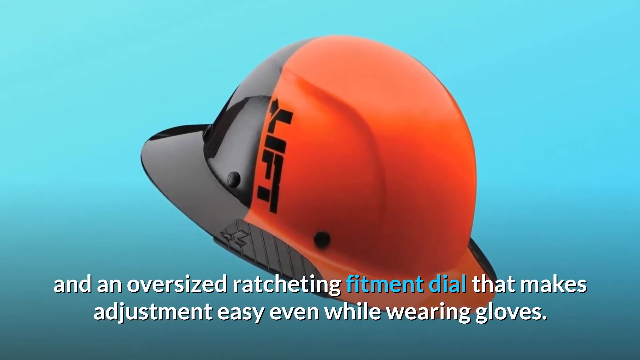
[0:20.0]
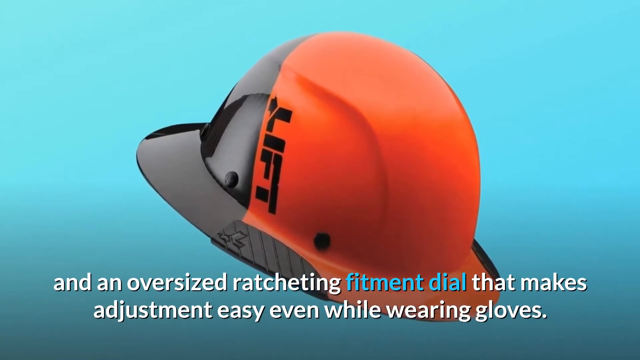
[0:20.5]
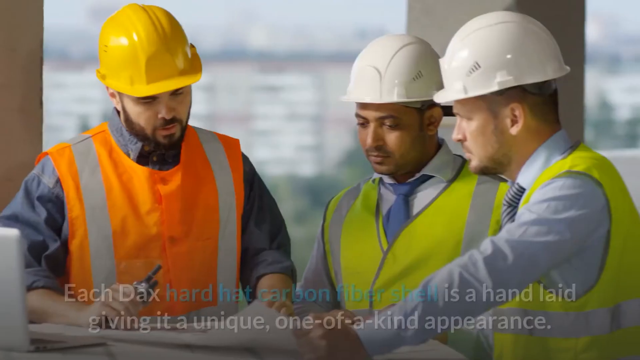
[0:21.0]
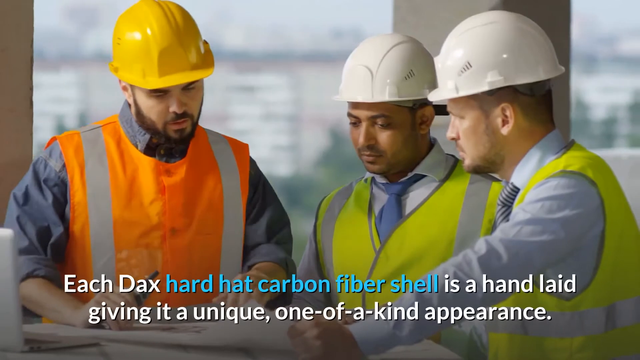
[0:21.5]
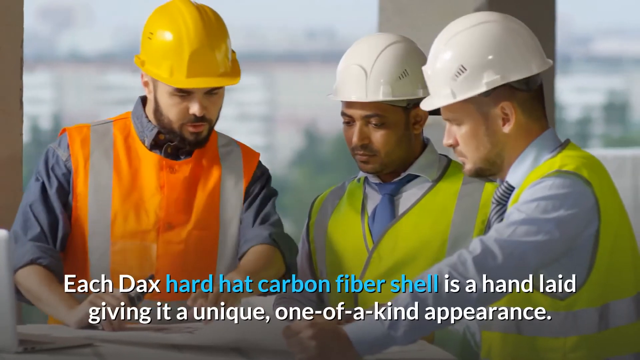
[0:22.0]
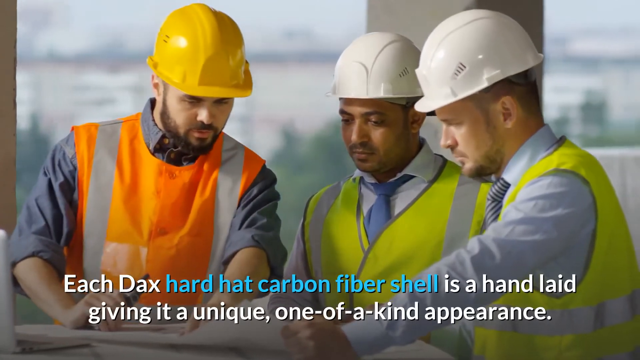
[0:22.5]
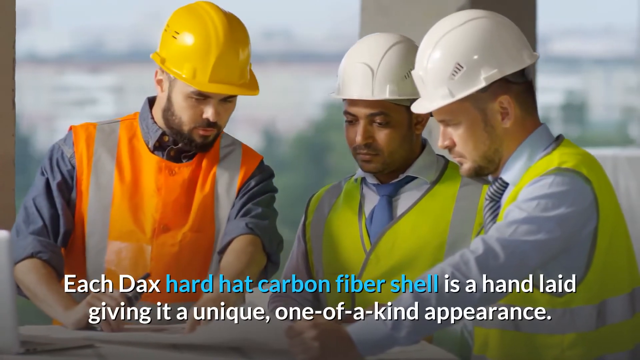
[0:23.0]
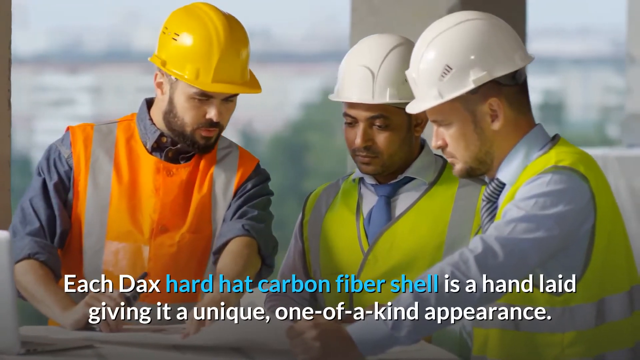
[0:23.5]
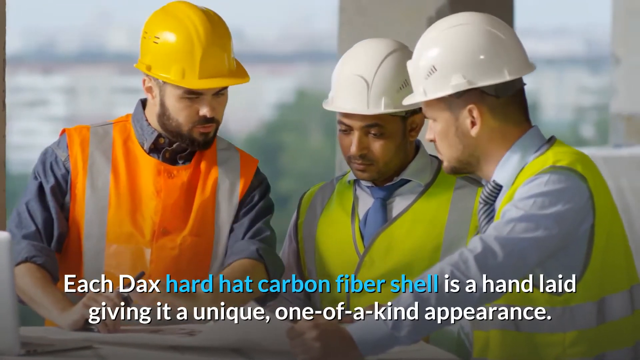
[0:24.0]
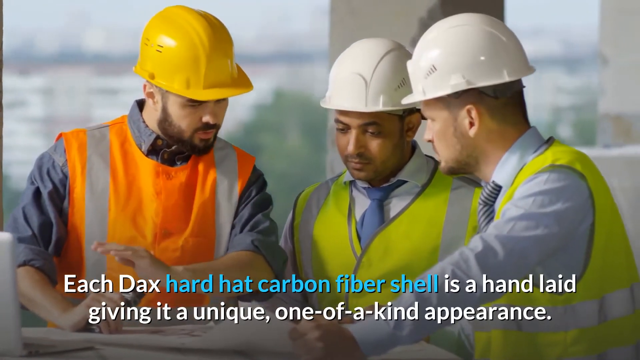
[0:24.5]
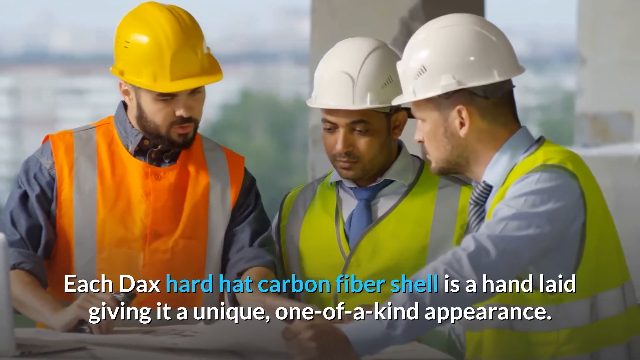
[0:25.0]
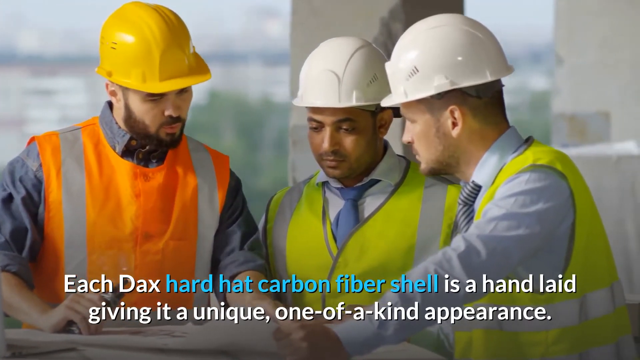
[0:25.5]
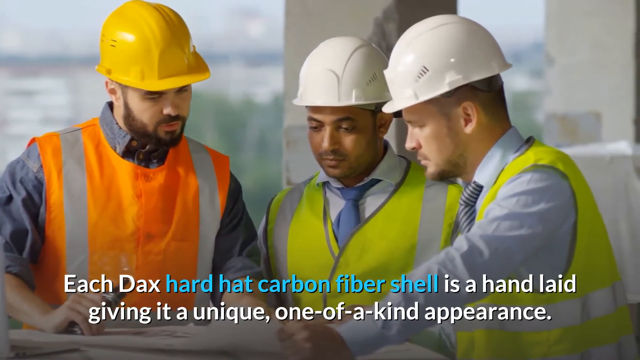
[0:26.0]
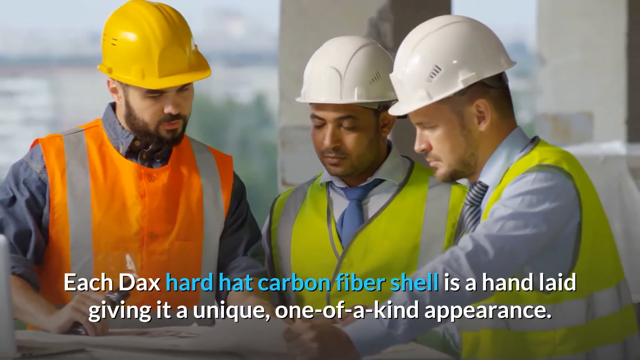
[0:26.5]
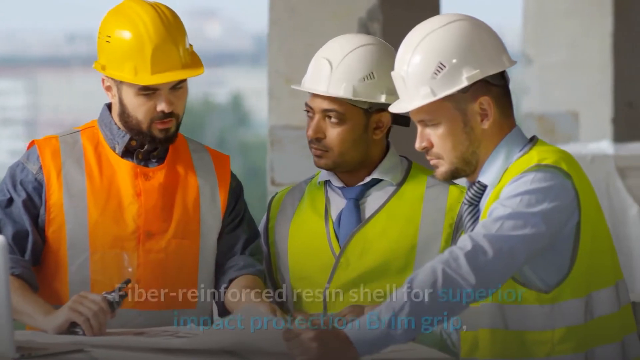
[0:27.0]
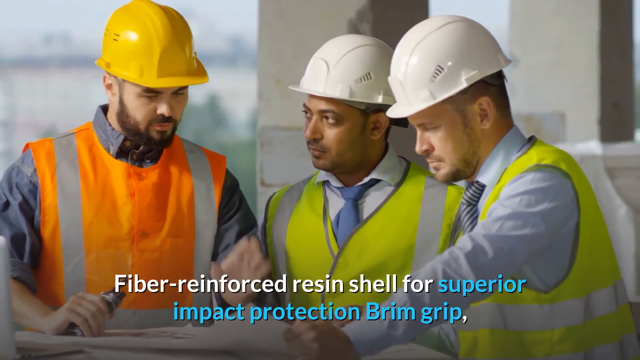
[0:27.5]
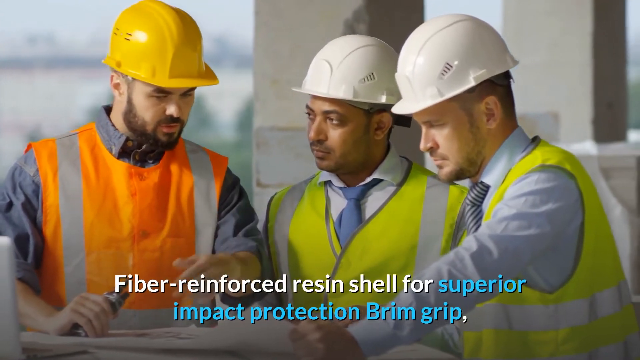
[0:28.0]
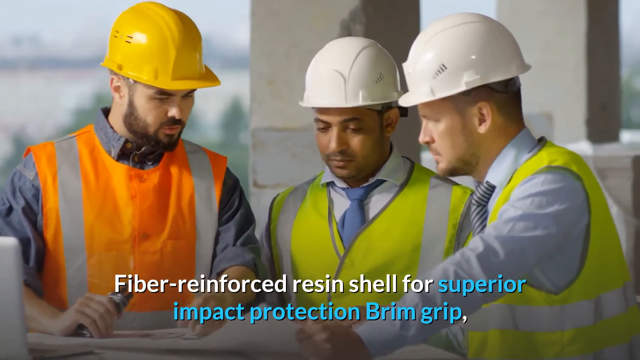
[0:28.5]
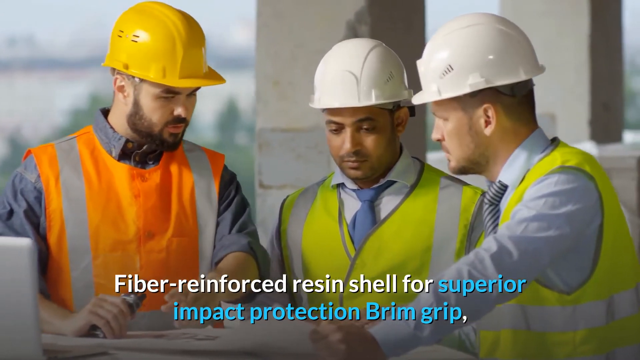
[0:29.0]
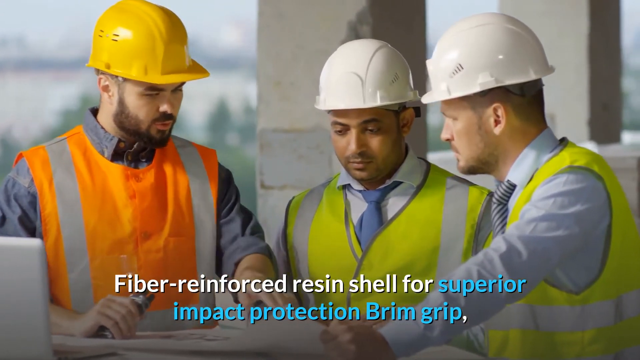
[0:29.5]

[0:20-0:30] The video shows what seems to be stock footage of three construction workers who are not wearing the hat featured in the video. Text on top says "each DACS hard hat carbon fiber shell is a hand laid, giving it a unique one-of-a-kind appearance." The three workers seem to be looking over a plan and discussing it. The worker on the left wears a yellow hard hat, and the other two wear white hard hats.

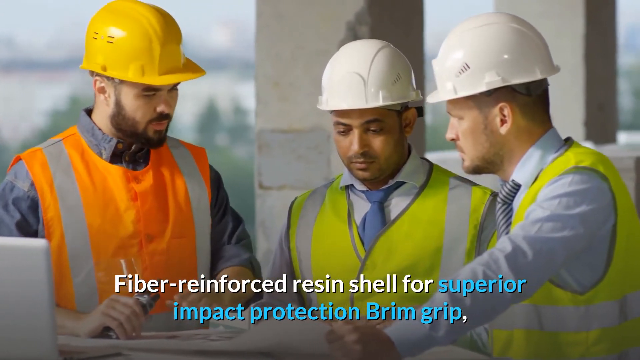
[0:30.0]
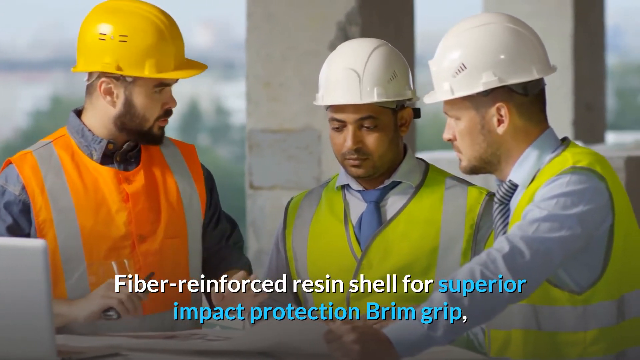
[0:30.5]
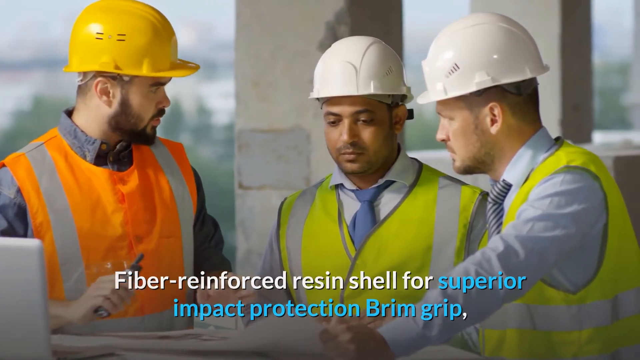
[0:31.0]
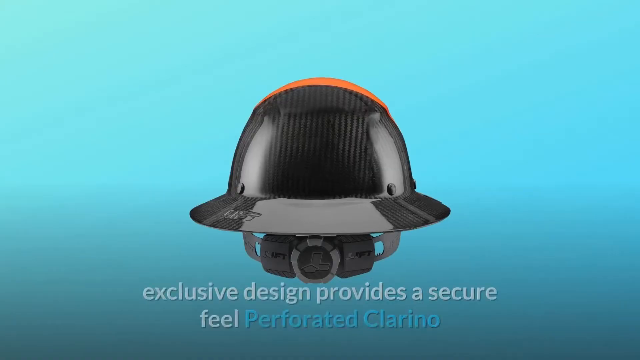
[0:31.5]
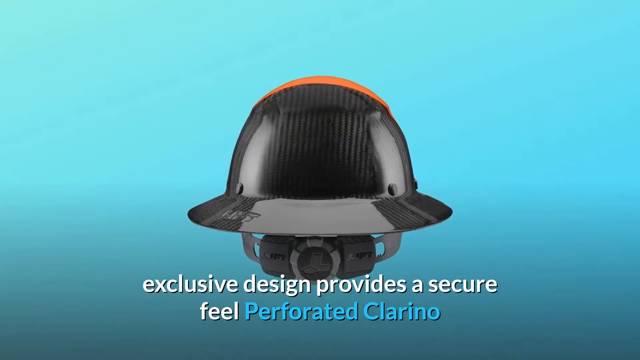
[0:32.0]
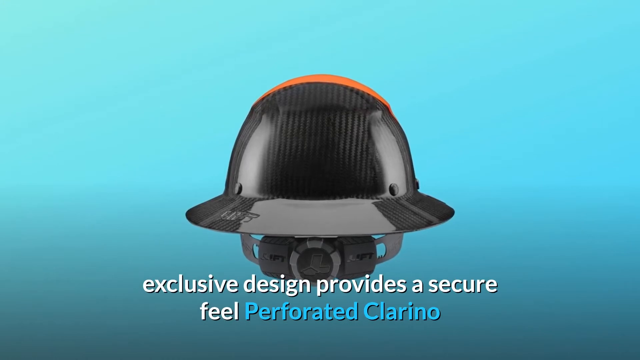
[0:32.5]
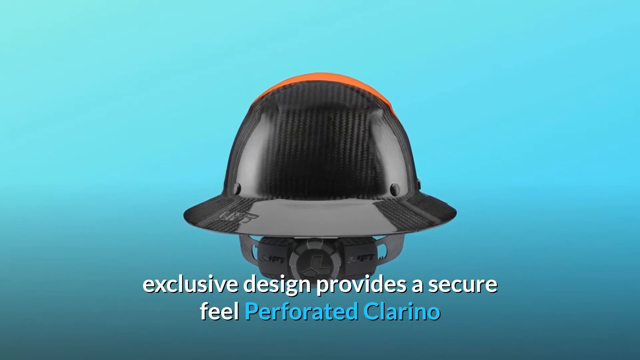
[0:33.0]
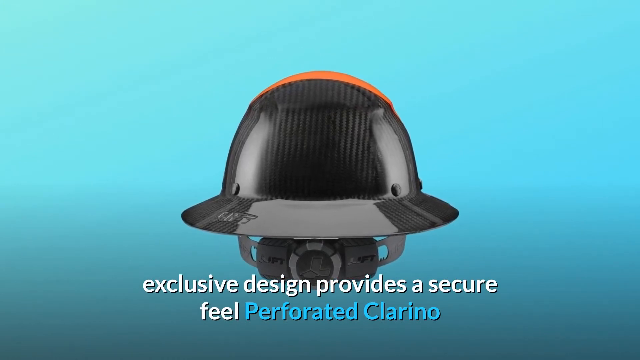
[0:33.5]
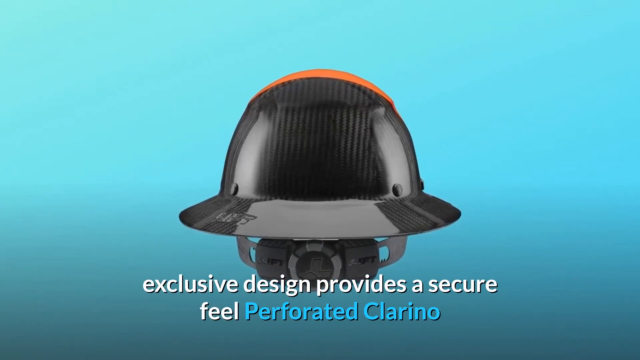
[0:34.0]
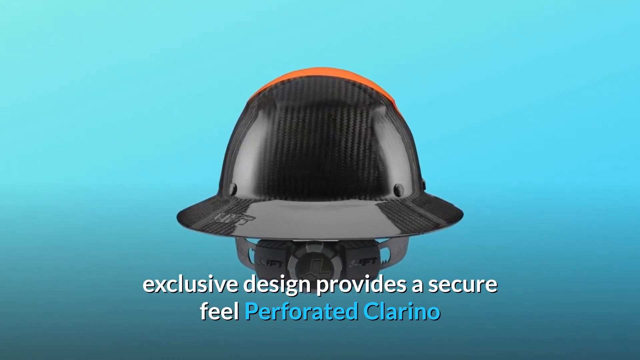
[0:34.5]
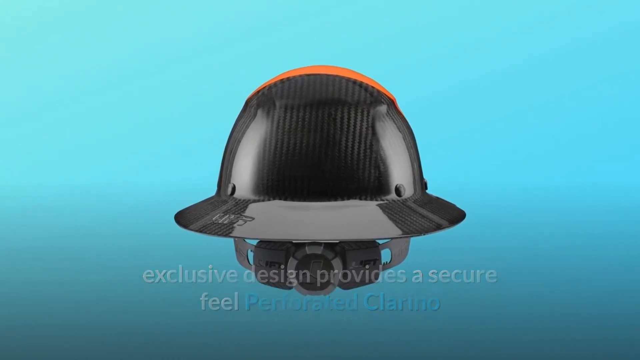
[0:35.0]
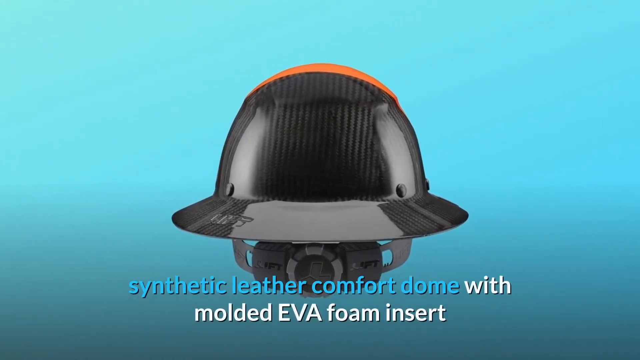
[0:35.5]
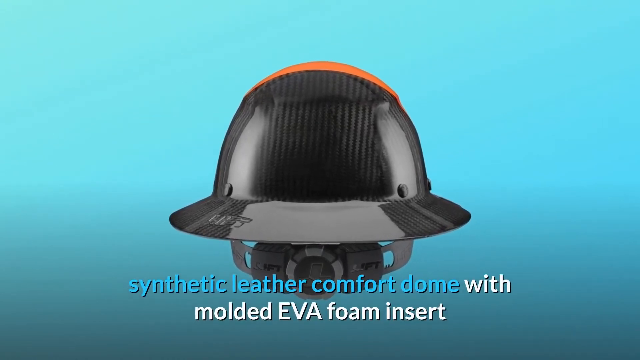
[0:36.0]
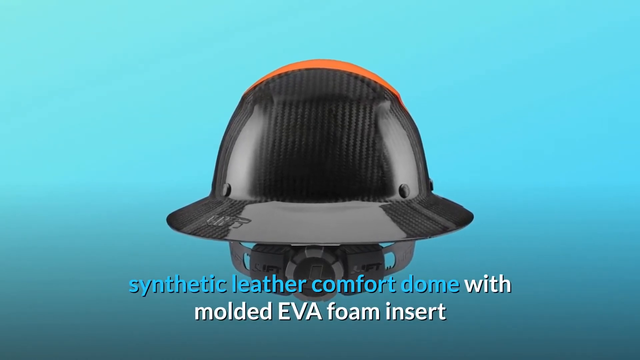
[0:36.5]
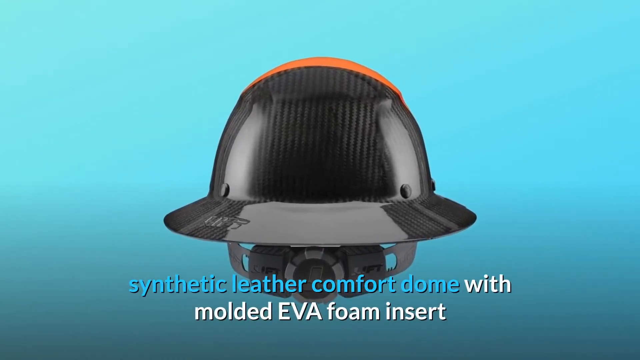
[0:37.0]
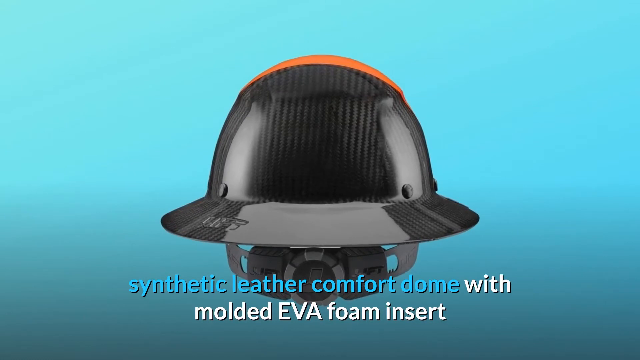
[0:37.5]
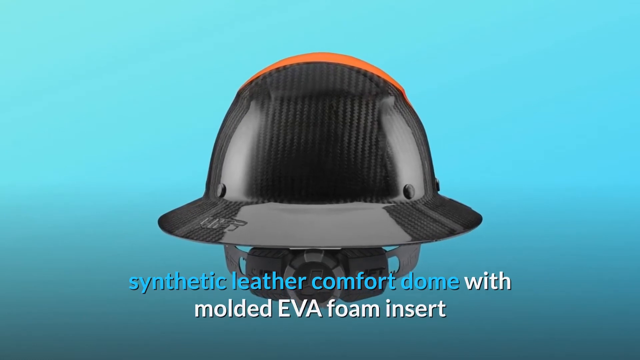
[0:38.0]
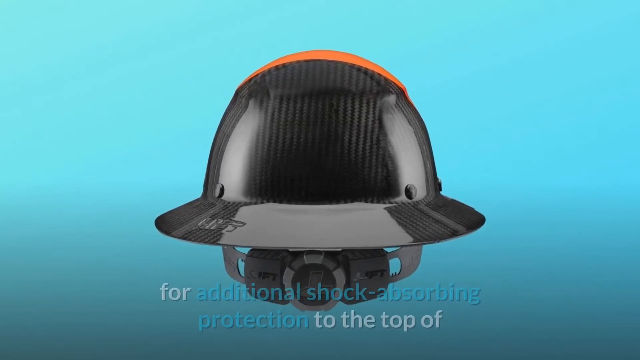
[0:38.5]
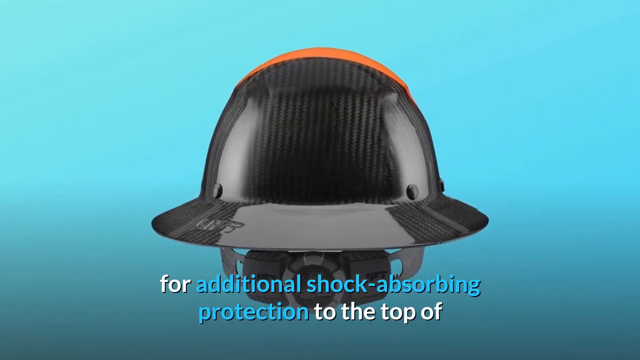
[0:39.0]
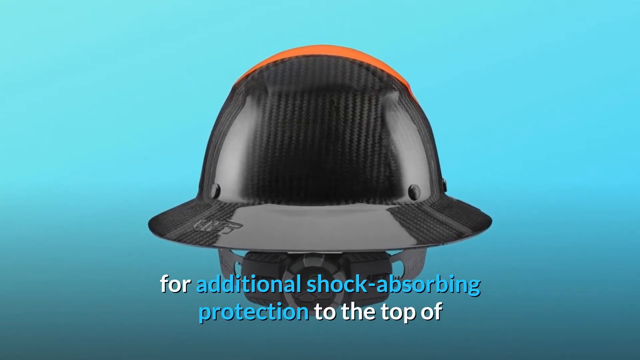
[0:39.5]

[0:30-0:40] The three construction workers are seen talking about their plan. Under their construction jackets, they are all wearing suits and collared shirts. Another image appears, showing the hat from the back. Text underneath says "exclusive design provides a secure feel, perforated Clarino synthetic leather comfort dome with molded EPA foam insert for additional shock absorbing protection to the top of," and the caption is cut off there. Some of the text in the video is in a light blue color.